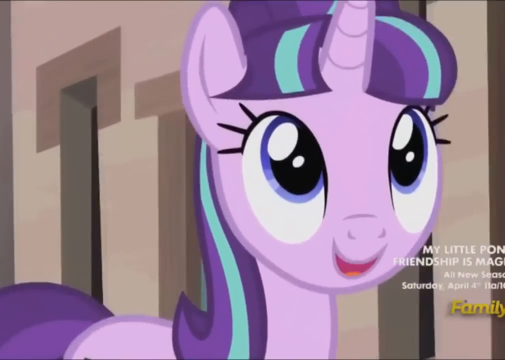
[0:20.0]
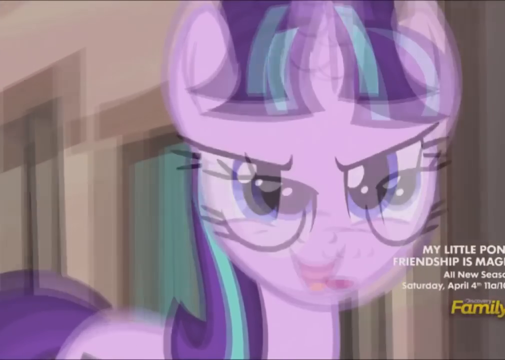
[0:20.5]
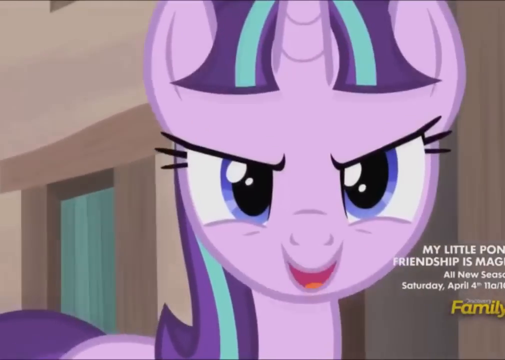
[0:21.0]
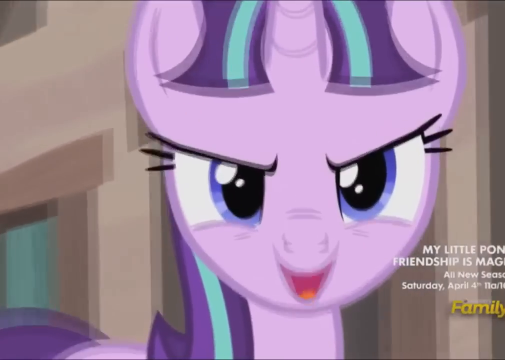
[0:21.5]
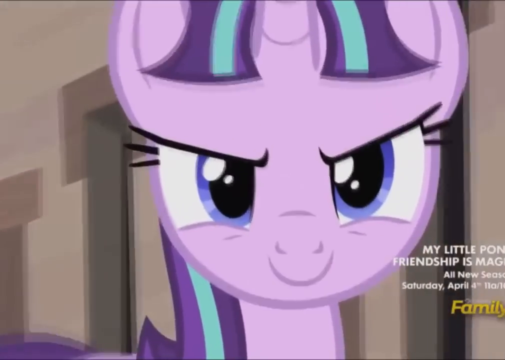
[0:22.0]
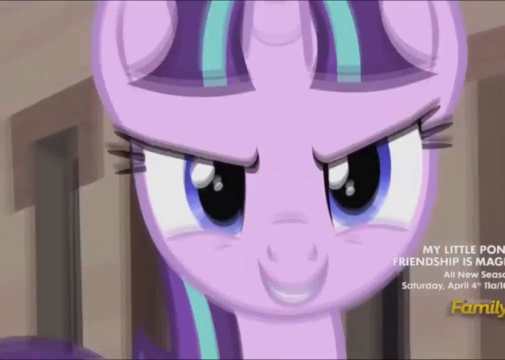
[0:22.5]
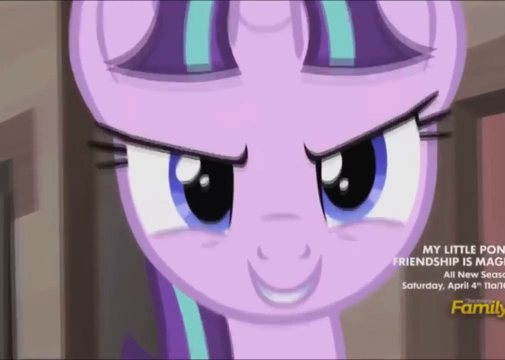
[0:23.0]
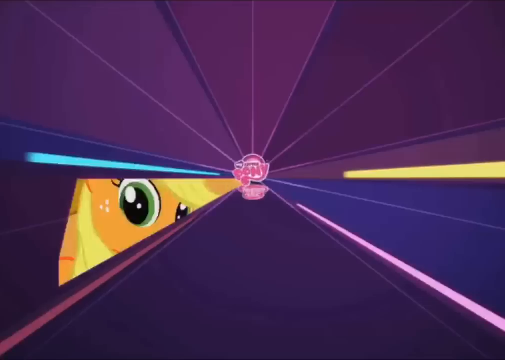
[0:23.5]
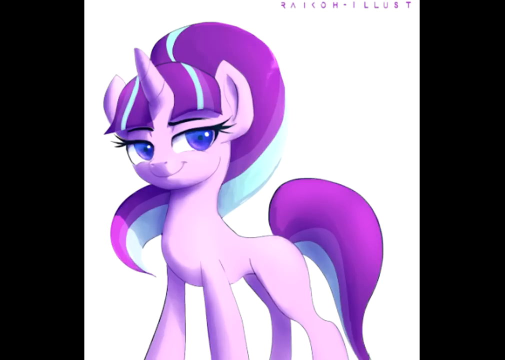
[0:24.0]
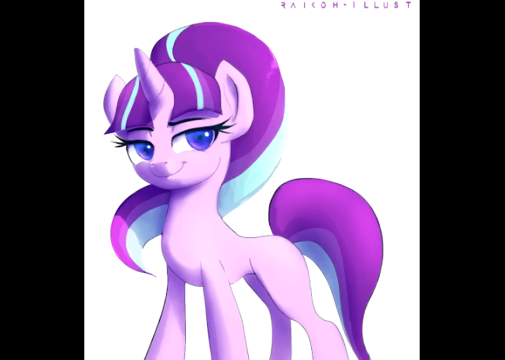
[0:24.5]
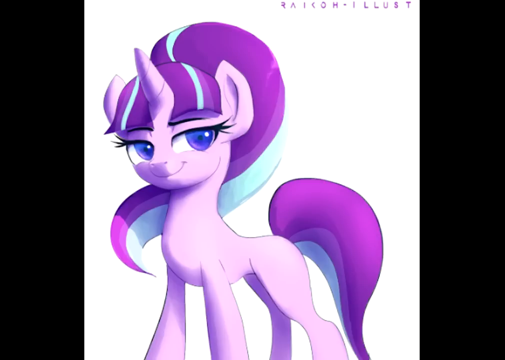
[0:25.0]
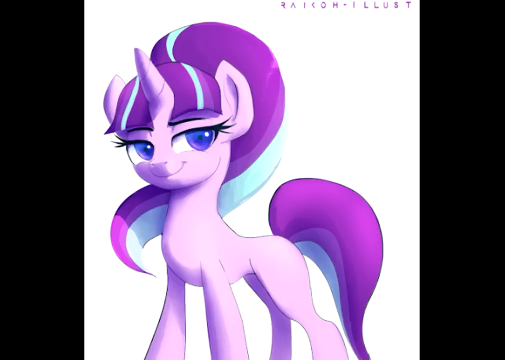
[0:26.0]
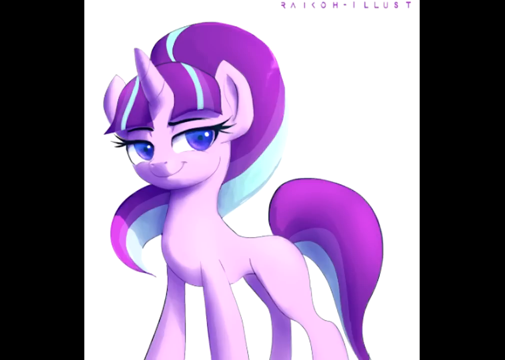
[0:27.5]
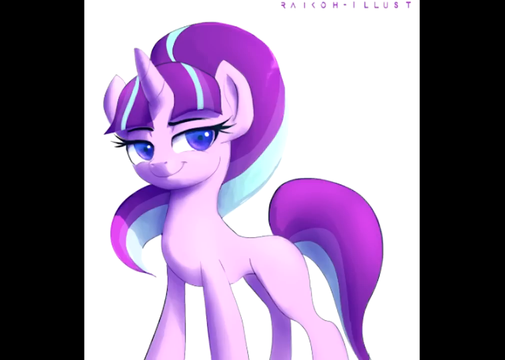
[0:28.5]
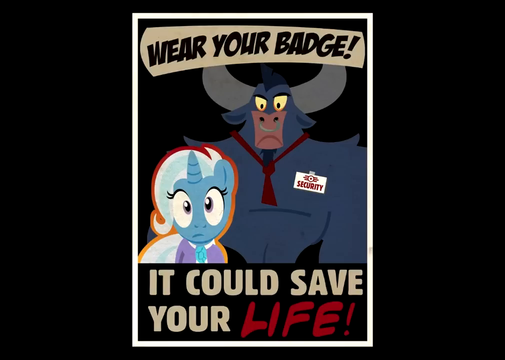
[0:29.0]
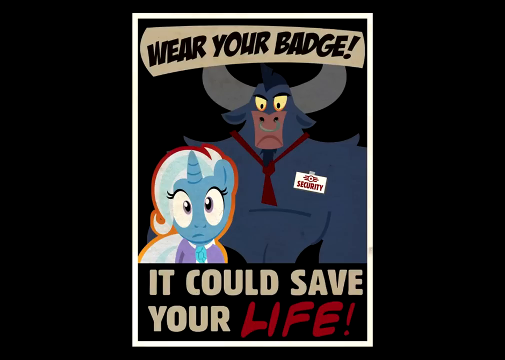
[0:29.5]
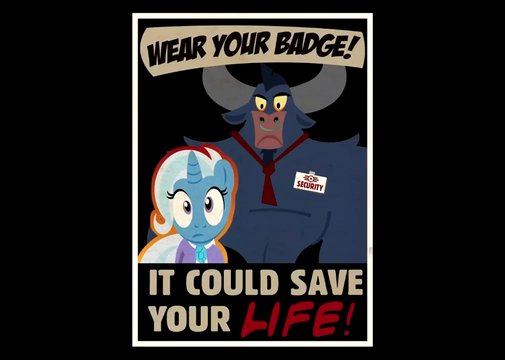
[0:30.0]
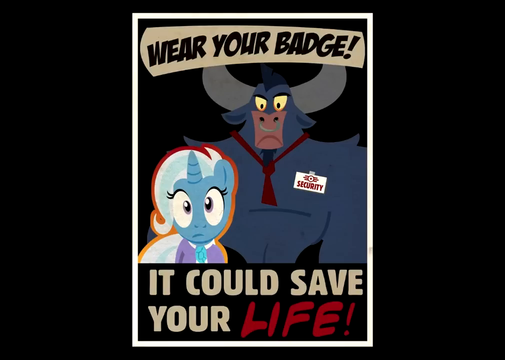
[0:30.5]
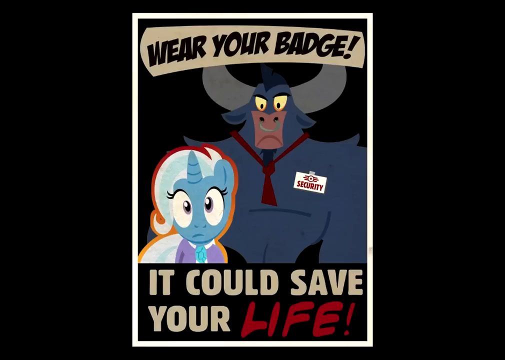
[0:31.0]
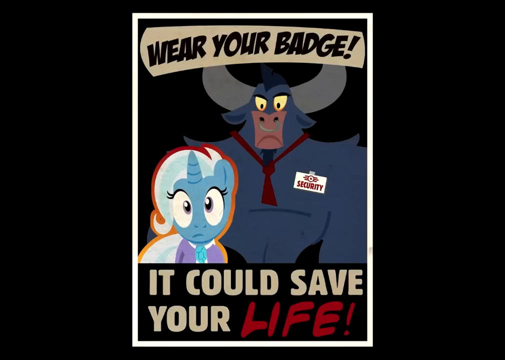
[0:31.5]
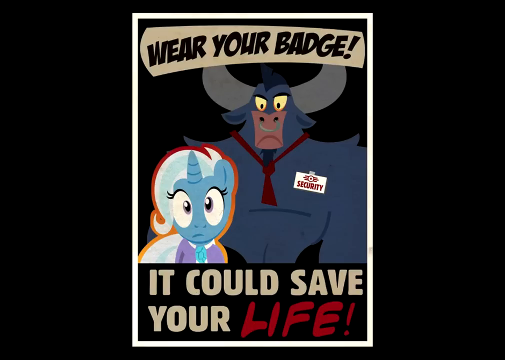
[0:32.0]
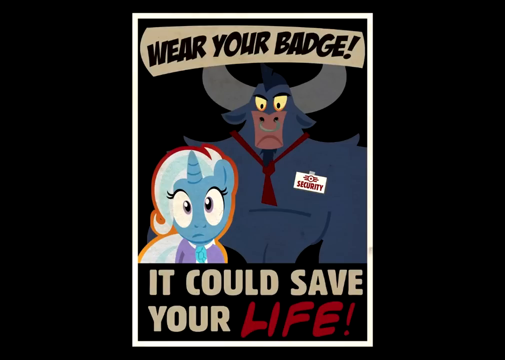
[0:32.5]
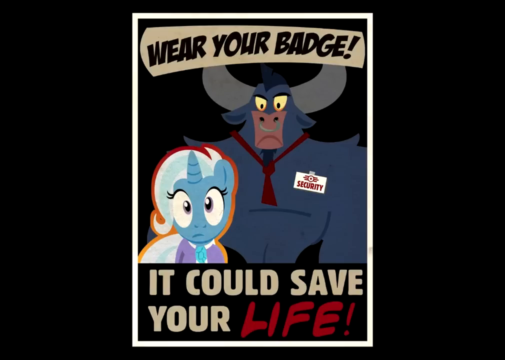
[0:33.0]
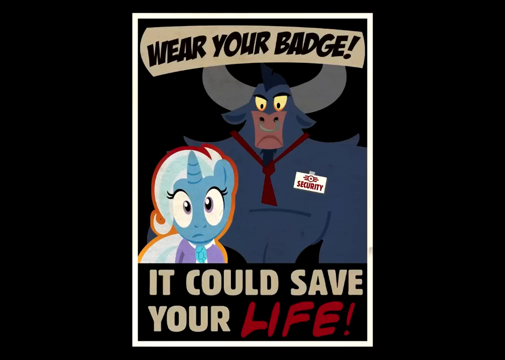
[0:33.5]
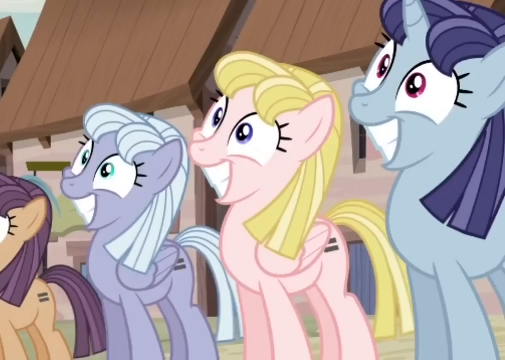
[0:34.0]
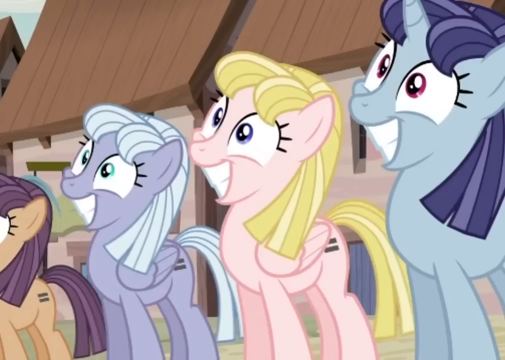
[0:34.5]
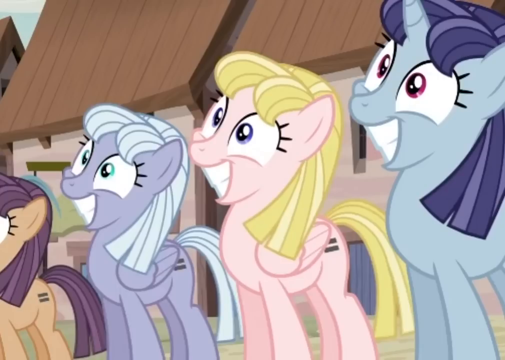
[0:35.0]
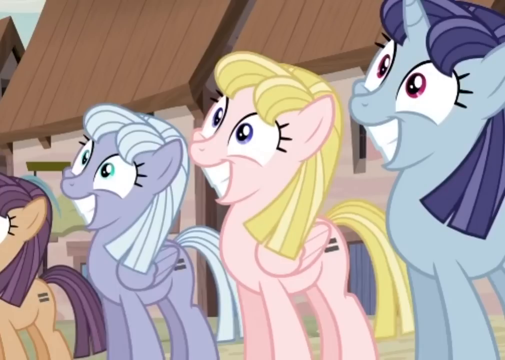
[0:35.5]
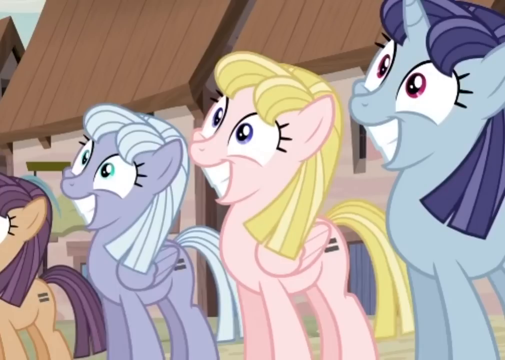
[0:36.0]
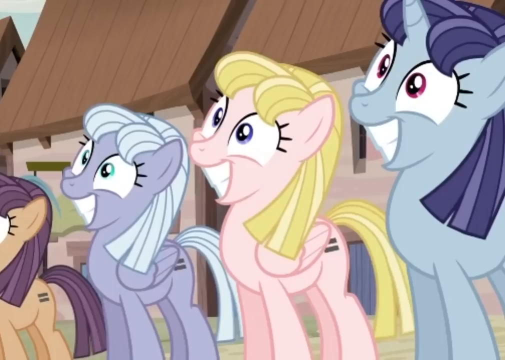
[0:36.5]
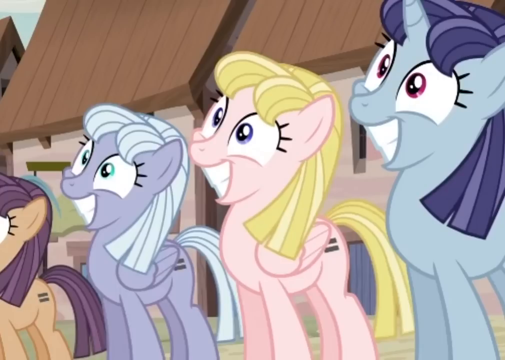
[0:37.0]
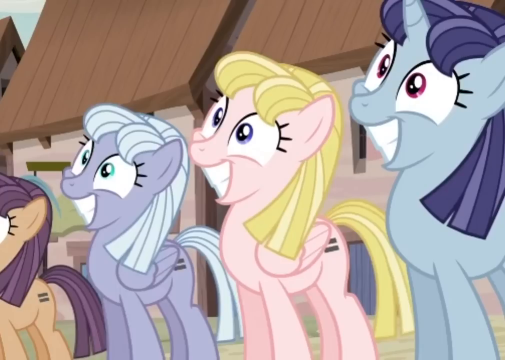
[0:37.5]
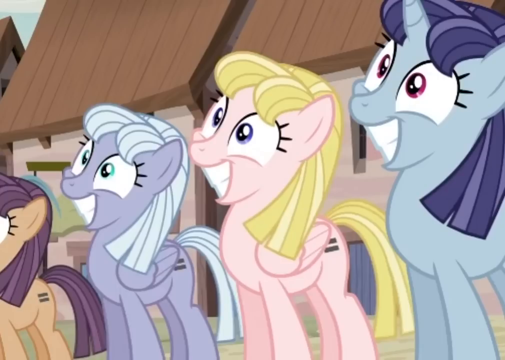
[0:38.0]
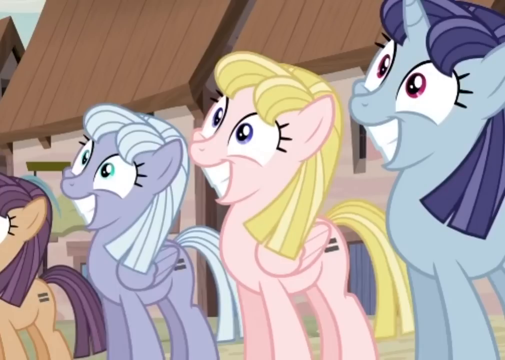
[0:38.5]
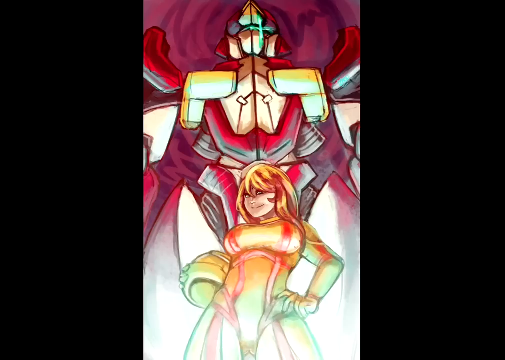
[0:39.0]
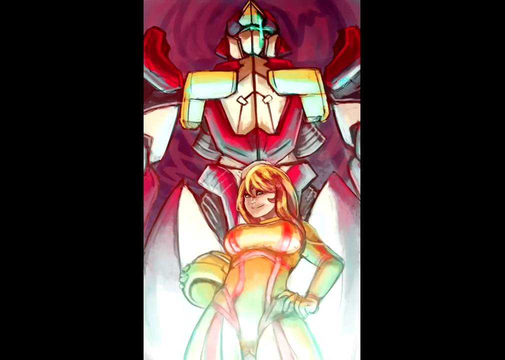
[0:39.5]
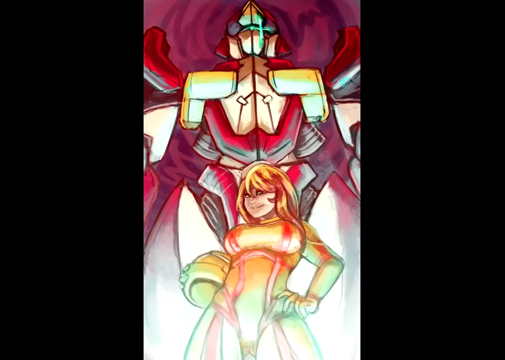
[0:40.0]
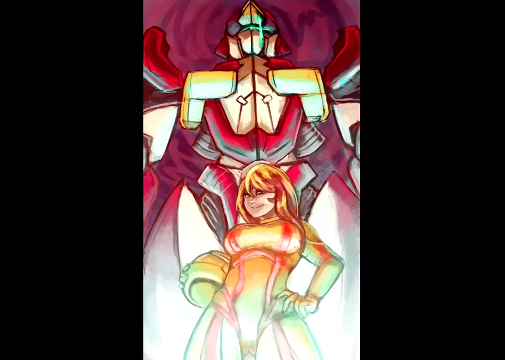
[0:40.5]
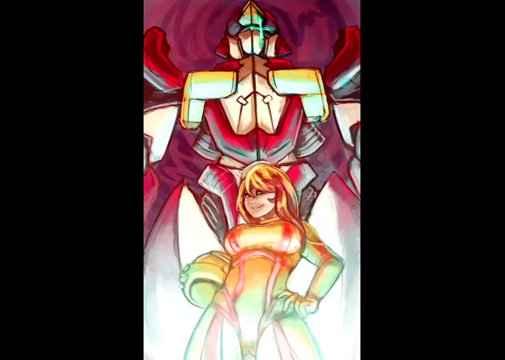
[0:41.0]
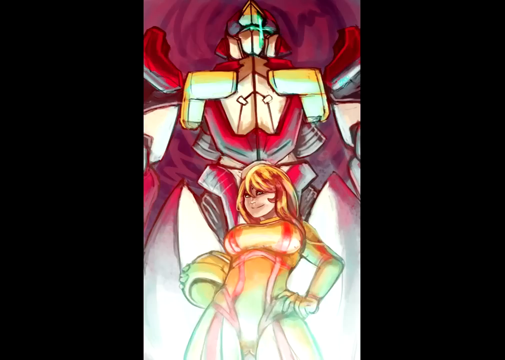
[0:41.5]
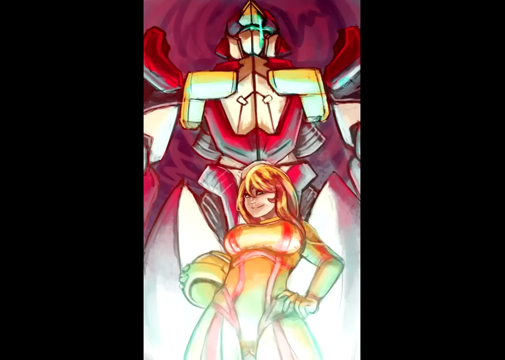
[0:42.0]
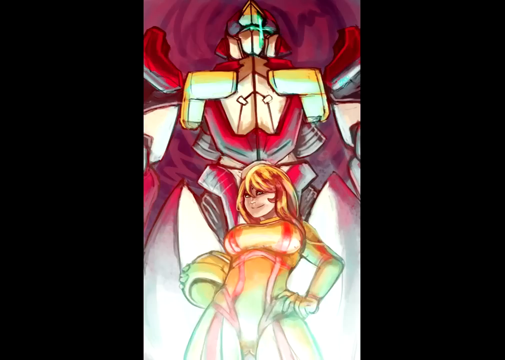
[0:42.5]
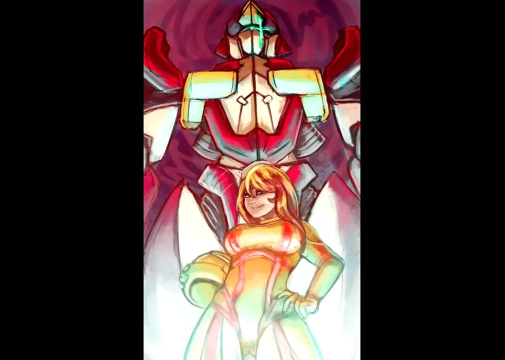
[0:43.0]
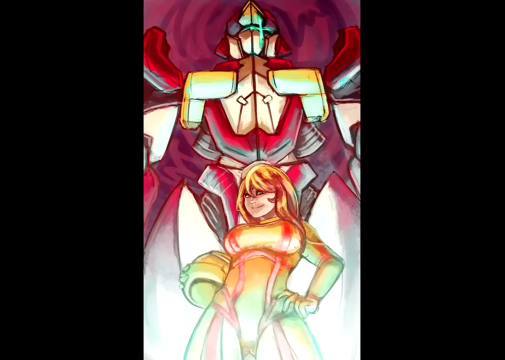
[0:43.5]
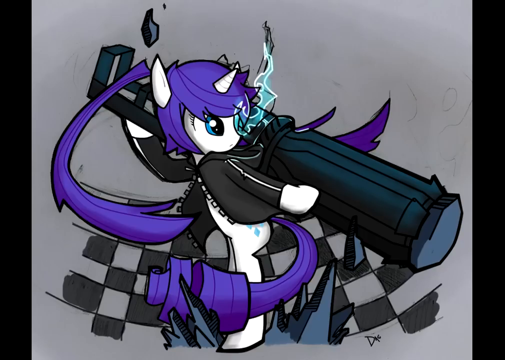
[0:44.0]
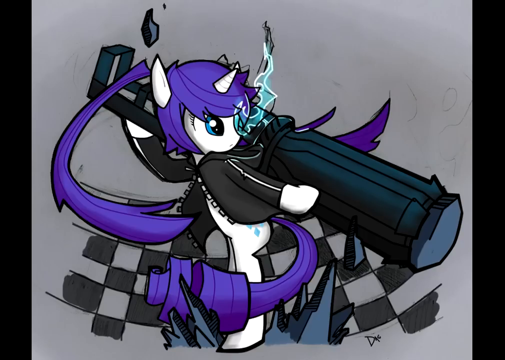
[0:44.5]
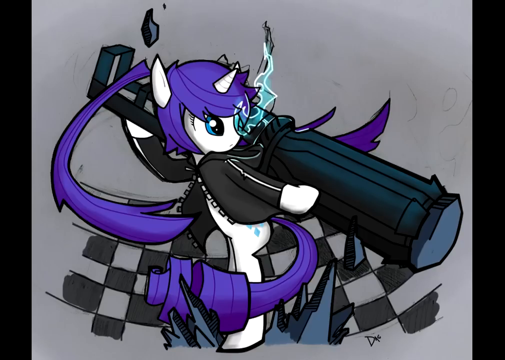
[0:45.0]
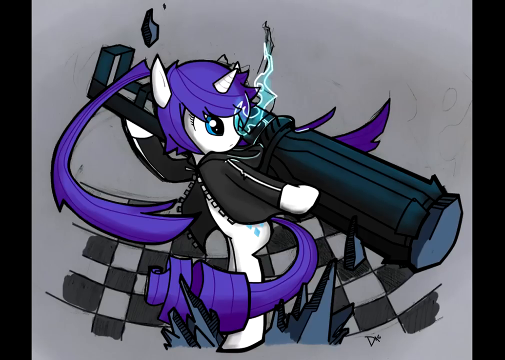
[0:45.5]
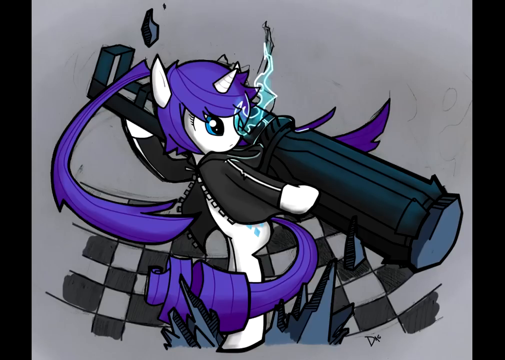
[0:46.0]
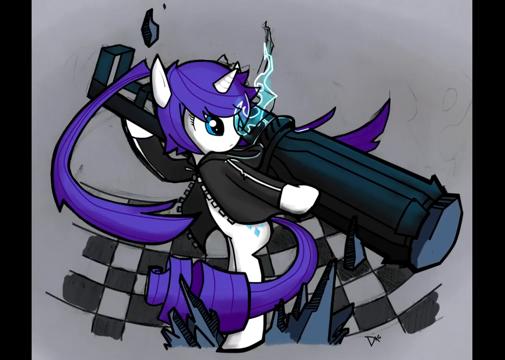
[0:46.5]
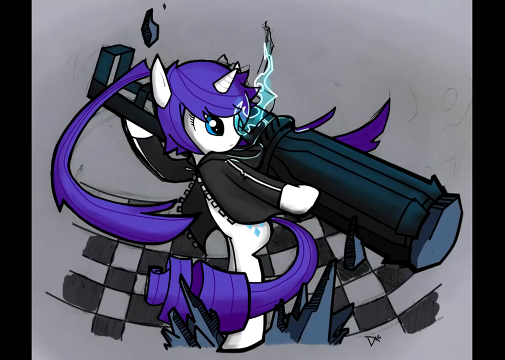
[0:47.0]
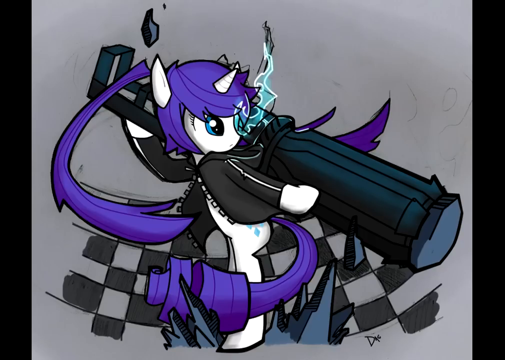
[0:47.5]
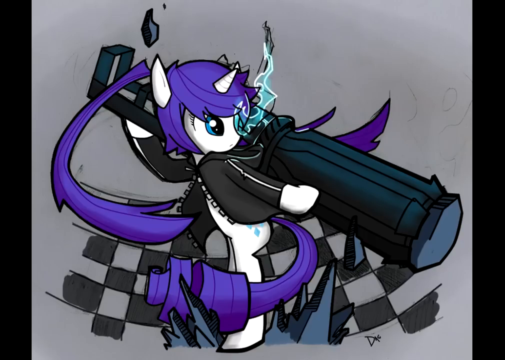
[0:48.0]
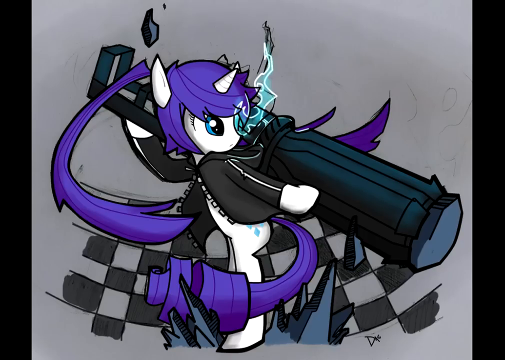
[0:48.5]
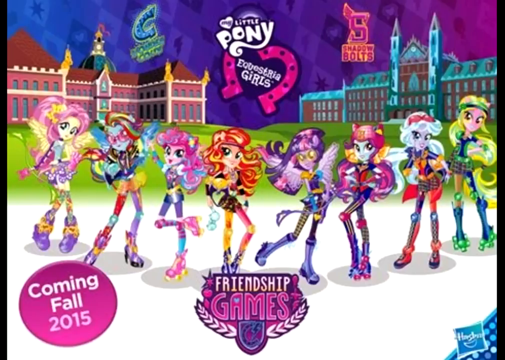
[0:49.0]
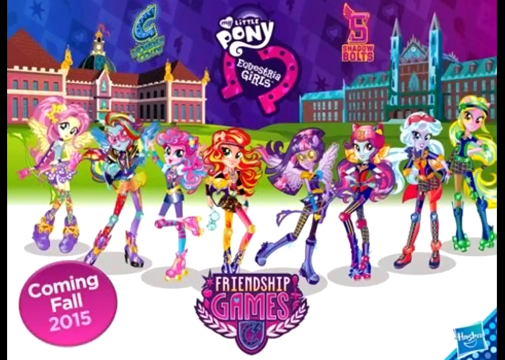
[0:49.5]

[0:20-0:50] The purple unicorn, Pegasus-type pony has light purple skin or fur, purple eyes, a big smile, three big eyelashes on each eye and a fringe on either side of her unicorn horn; her mane and tail are a mix of stripes in purple, dark purple and a bright sort of aqua-mint. She gets a very determined look on her face and turns toward the camera. An image then says "RICO Illust" and shows a picture of the same pony that looks like it was drawn by an artist, shown within the cartoon. Another piece of fan art says "wear your badge" and shows a bull wearing a security badge and a little unicorn pony in blue, with "it could save your life" at the bottom. The video cuts back to an image of the ponies grinning in a line, all very similar in shape. Another image shows a robot man and a bubble lady wearing yellow, then another shows a white pony with a purple mane holding a gun, and then something says "friendship games". These appear to possibly be adverts or fan art.